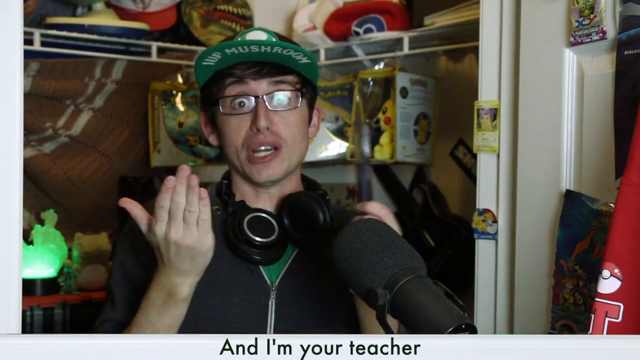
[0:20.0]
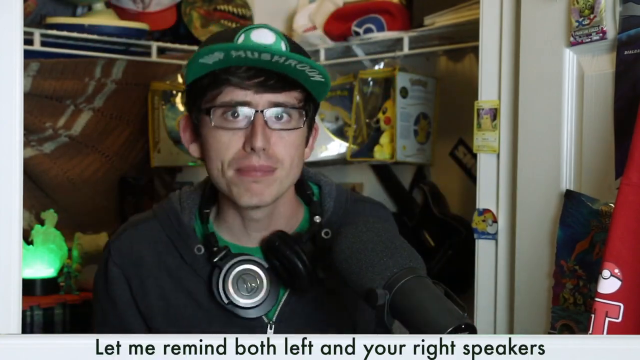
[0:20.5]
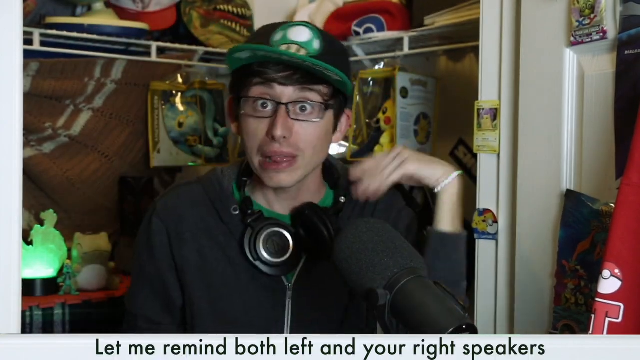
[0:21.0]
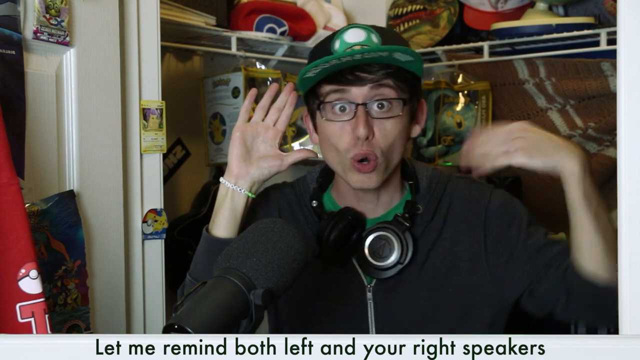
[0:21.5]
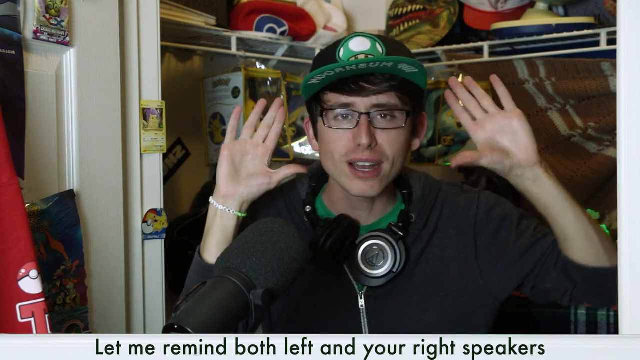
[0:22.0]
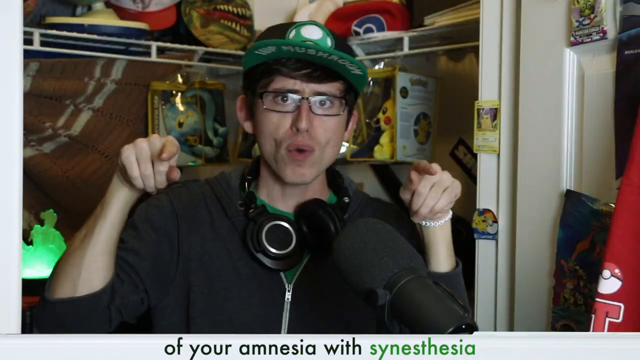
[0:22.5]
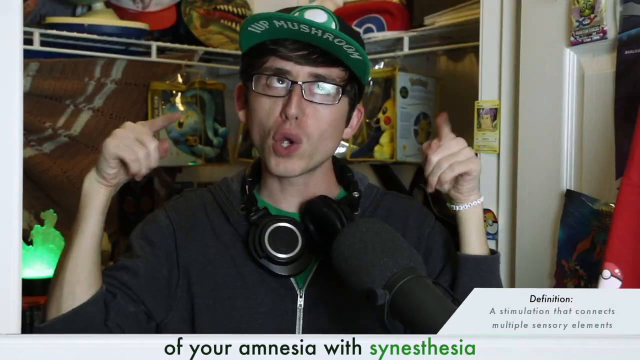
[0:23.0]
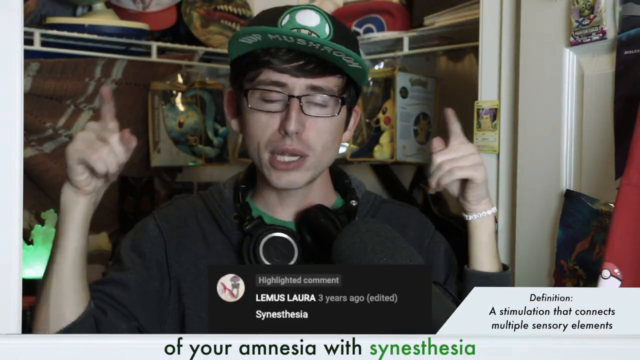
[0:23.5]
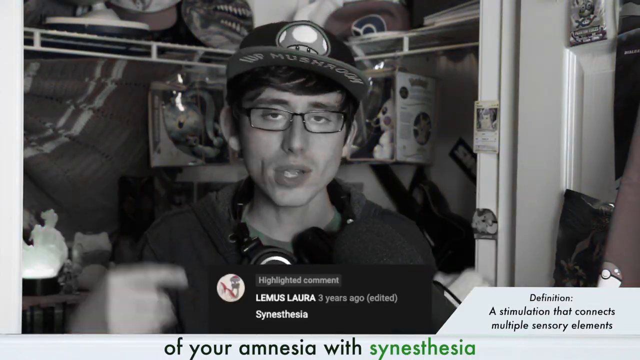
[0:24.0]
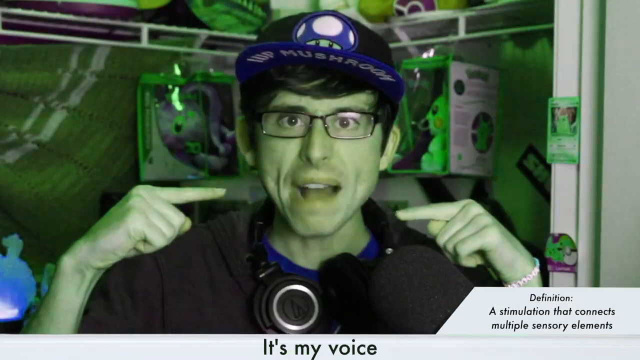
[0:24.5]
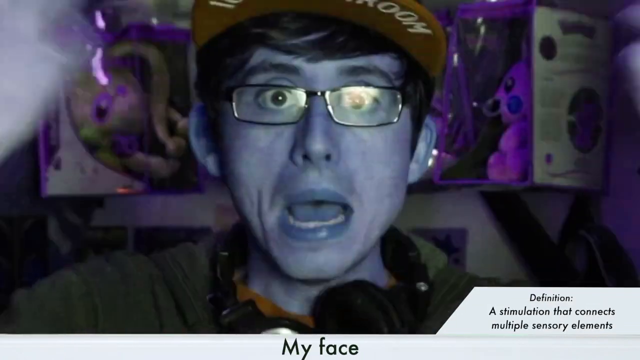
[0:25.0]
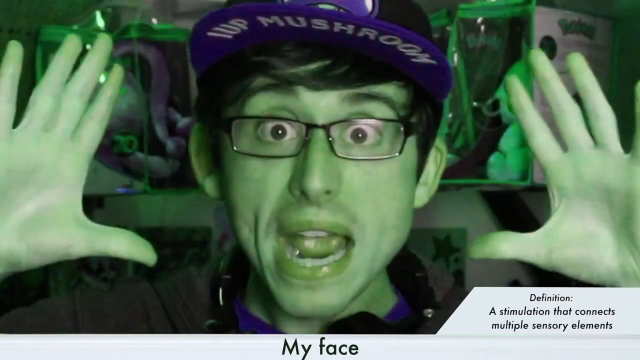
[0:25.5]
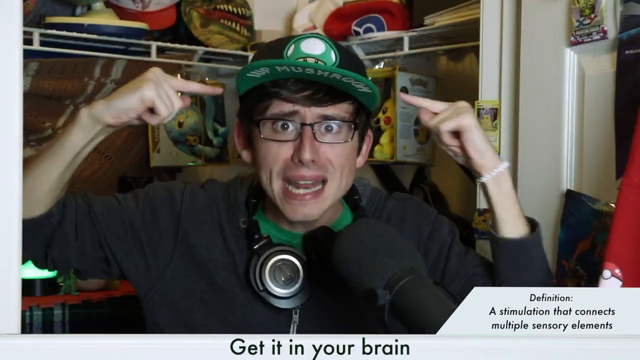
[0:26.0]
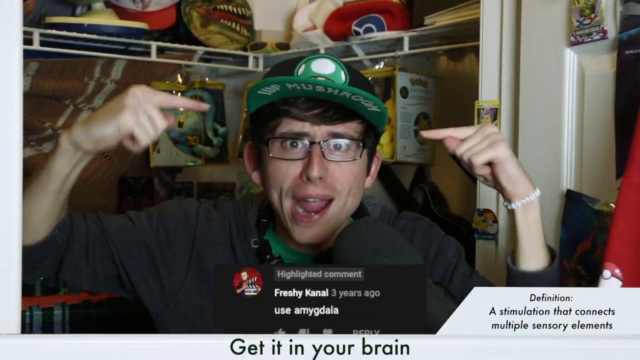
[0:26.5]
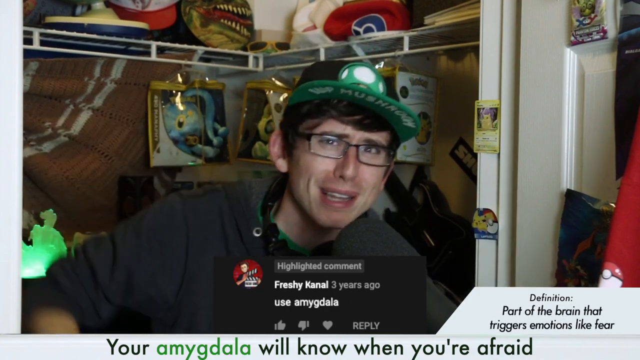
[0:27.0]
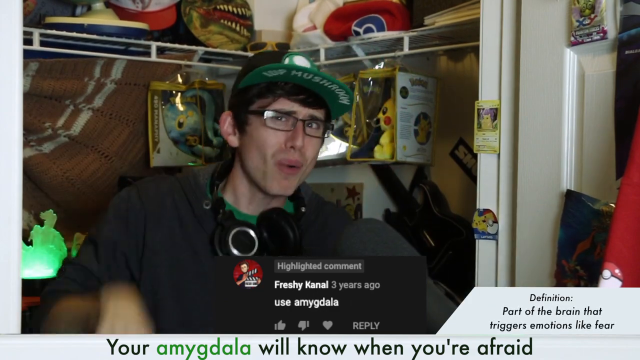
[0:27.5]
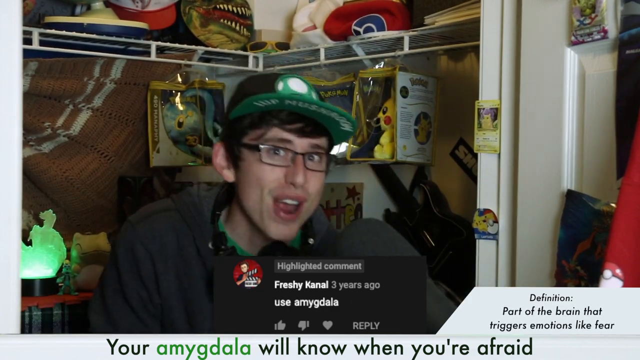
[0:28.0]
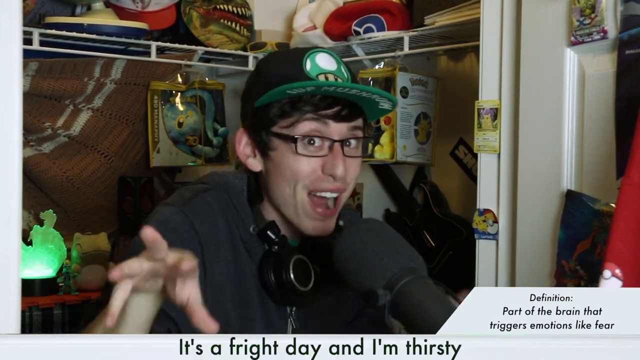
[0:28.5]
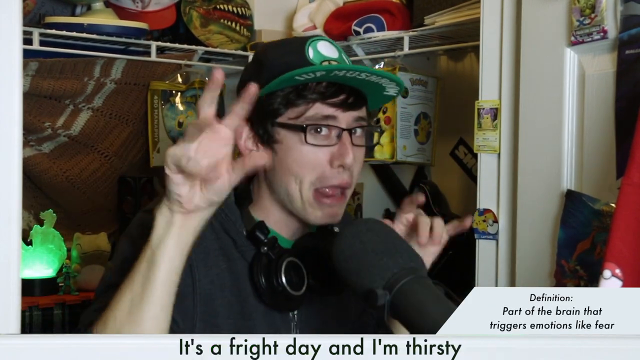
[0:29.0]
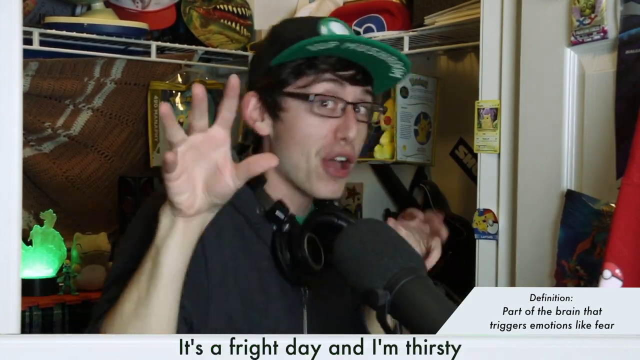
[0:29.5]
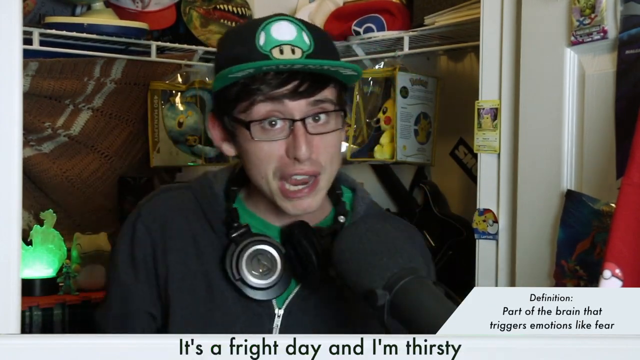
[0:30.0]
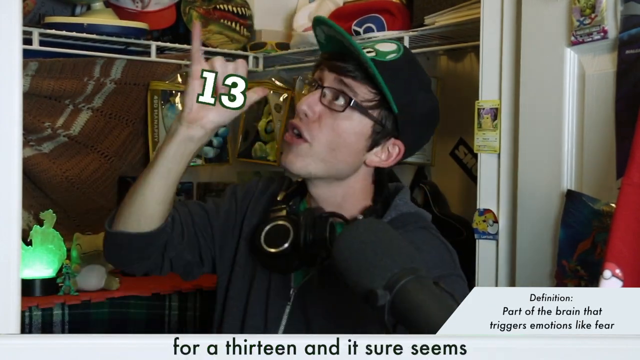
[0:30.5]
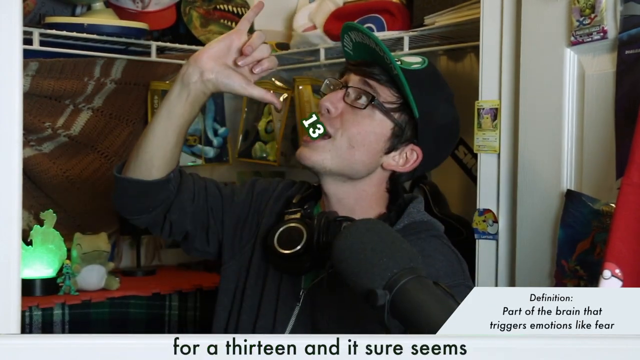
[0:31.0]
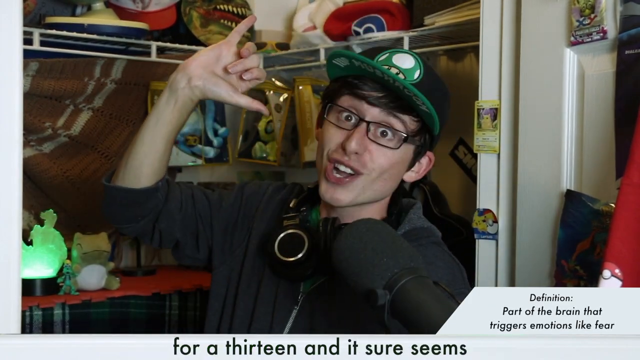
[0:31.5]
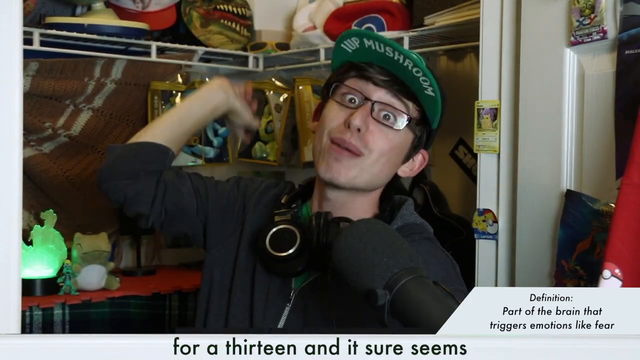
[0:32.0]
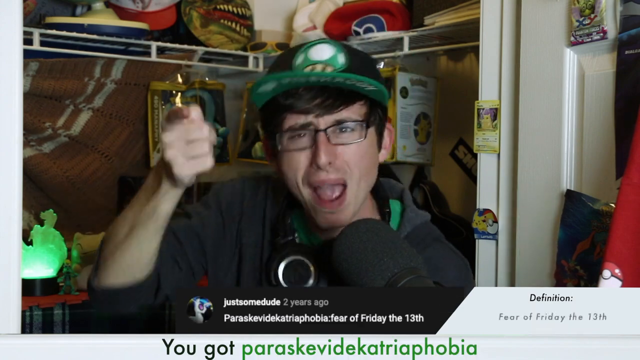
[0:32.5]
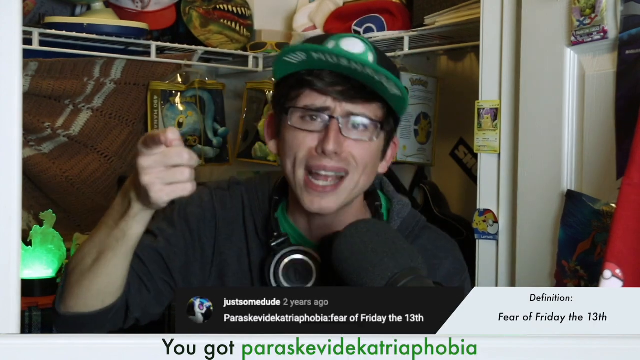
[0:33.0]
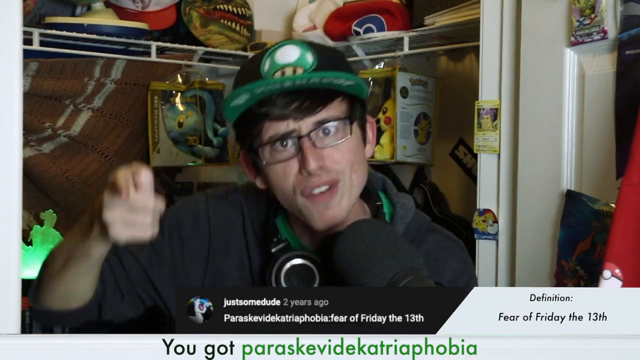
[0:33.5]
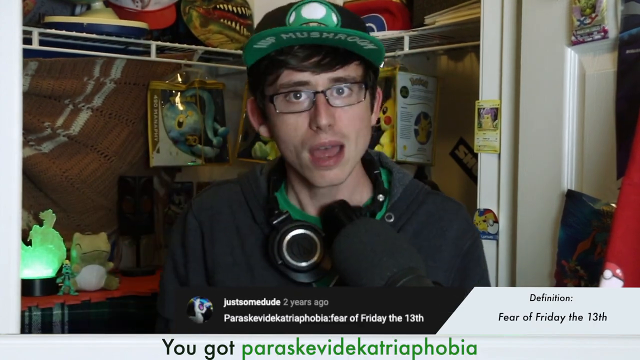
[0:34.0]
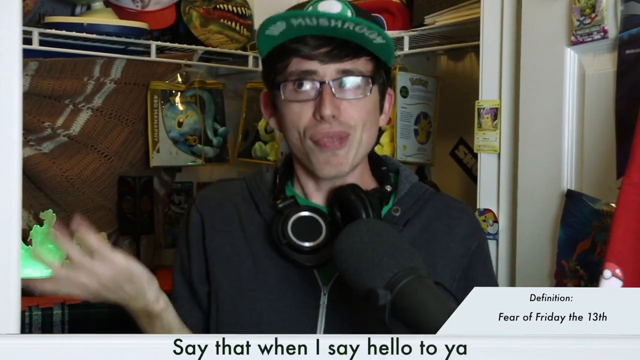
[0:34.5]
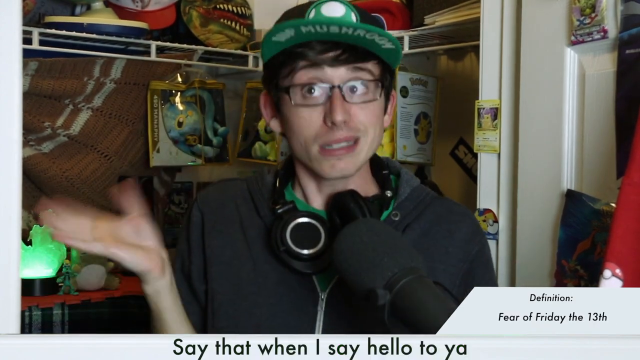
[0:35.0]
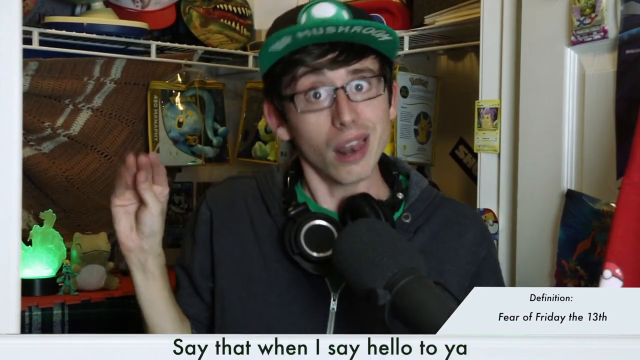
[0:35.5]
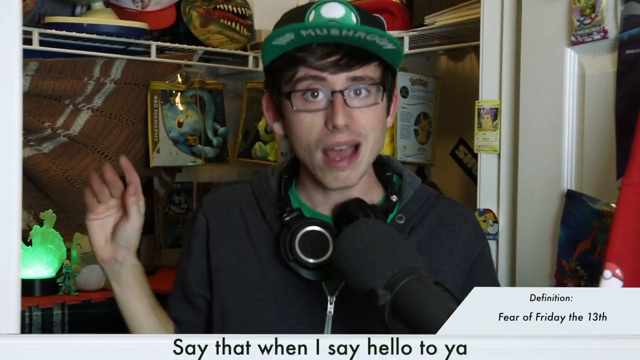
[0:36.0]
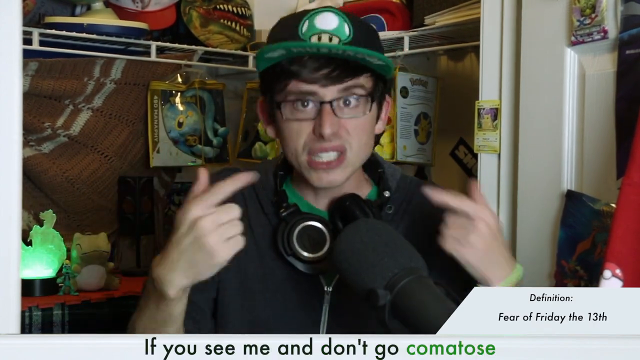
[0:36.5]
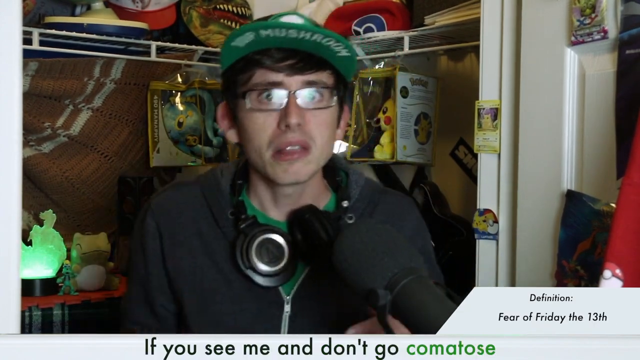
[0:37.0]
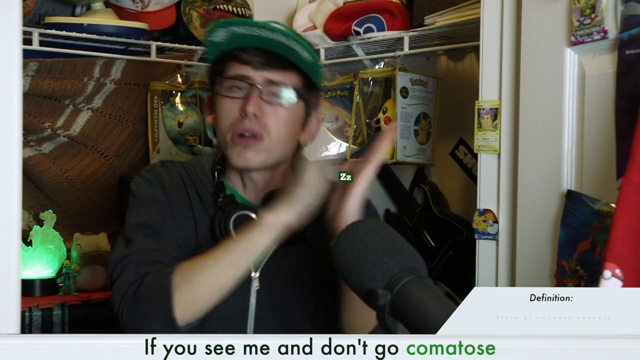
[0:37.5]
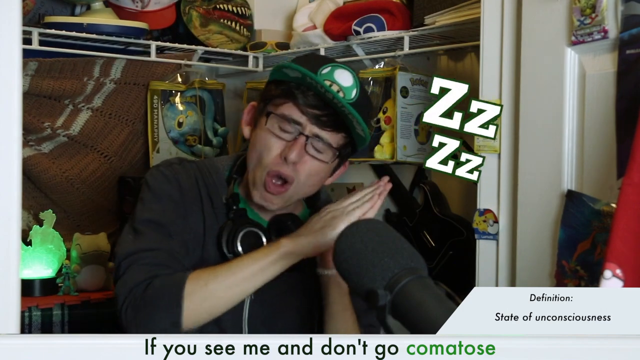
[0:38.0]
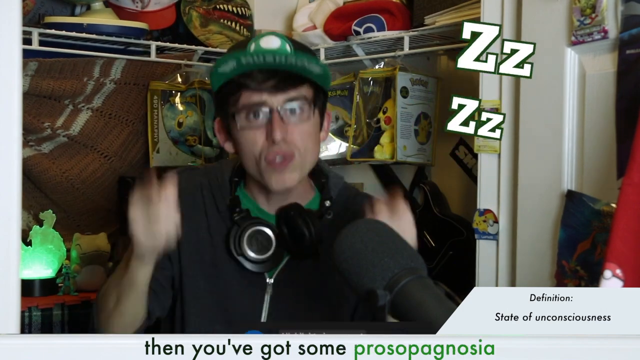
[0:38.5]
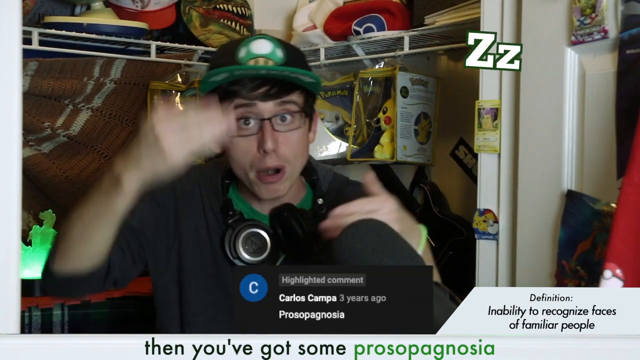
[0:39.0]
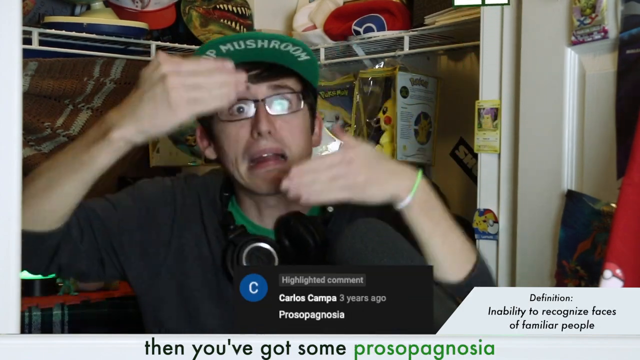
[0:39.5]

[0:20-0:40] The man claps his hands together while holding a black comb in his left hand. He shows his left hand, then his right, as the camera switches to a mirror image. Once both hands are shown, the camera switches back to the original angle and a black box pops up from the bottom, with a white box at the bottom right. The black box is a comment from Lemus Laura that says "Synesthesia", and the white box gives the definition of synesthesia. Across the bottom of the video is a grey bar with closed captioning of the rap the man is performing; the defined word "Synesthesia" is in green while the other words are in black. The man points to his cap and the video flashes in various neon-like colours. Another comment pops up saying "use amygdala" and the definition changes to define amygdala. The man continues to rap, using his hands to entertain the audience. A third comment appears, "Paraskevidekatriaphobia:fear of Friday the 13th", and the definition changes to match. The fourth comment is "prosopagnosia", and the definition changes again.